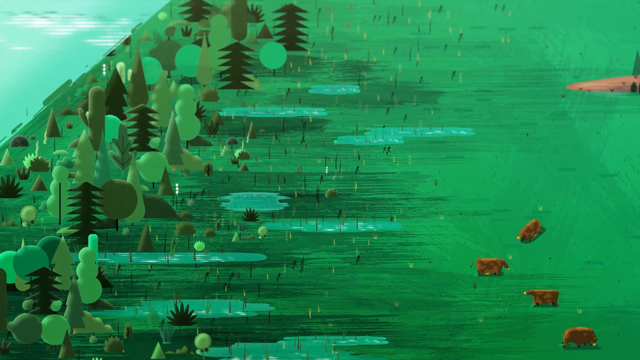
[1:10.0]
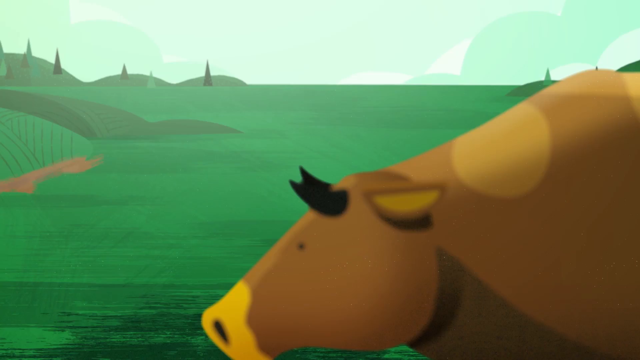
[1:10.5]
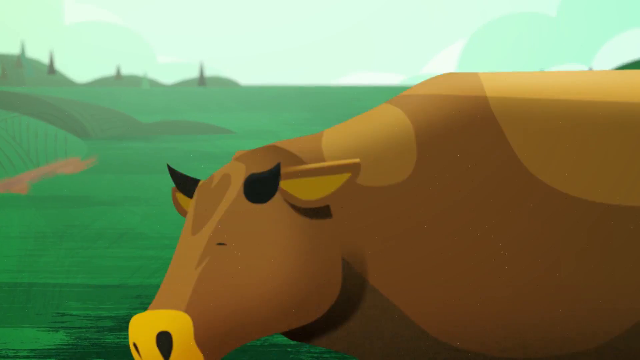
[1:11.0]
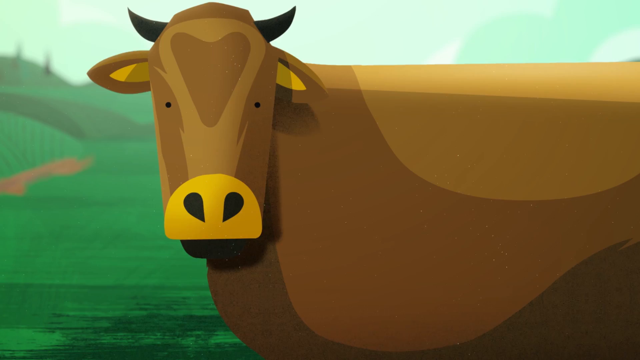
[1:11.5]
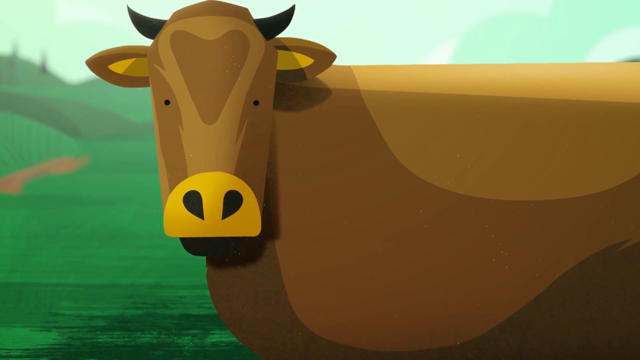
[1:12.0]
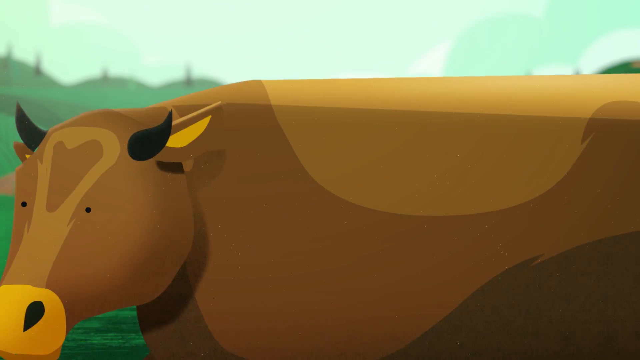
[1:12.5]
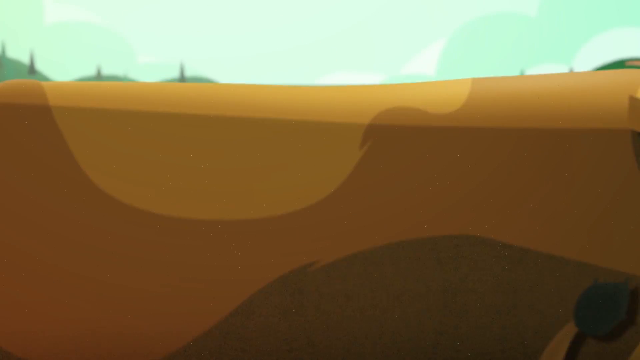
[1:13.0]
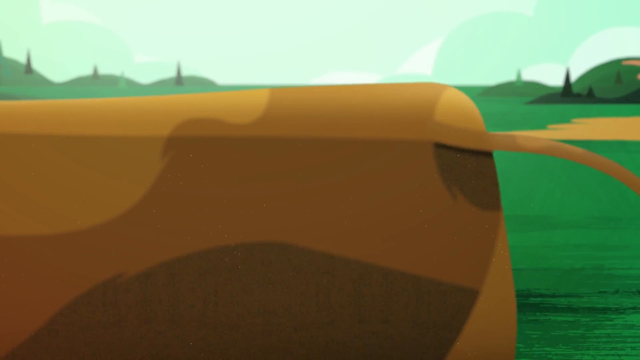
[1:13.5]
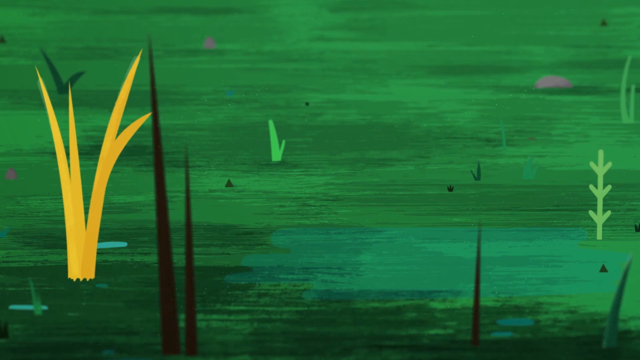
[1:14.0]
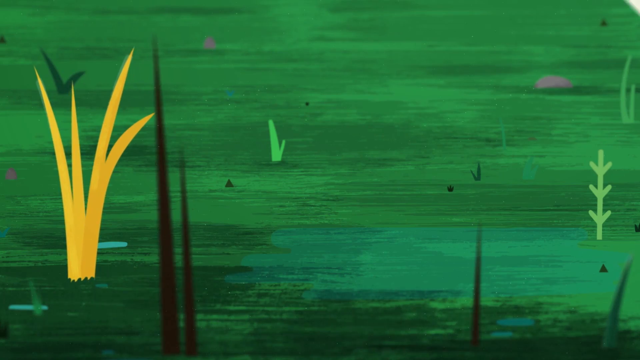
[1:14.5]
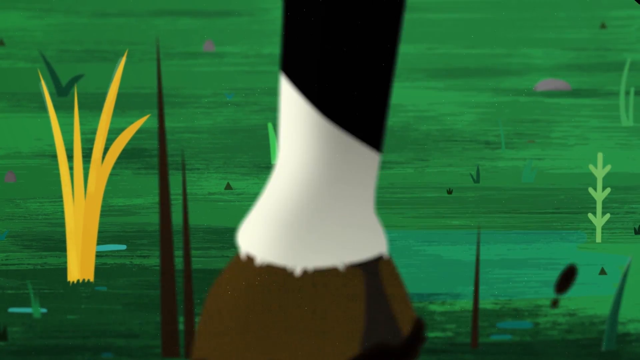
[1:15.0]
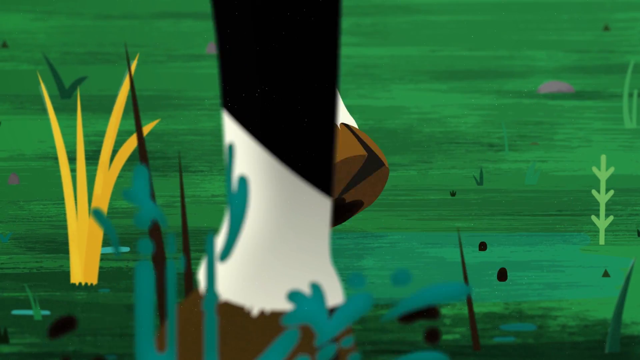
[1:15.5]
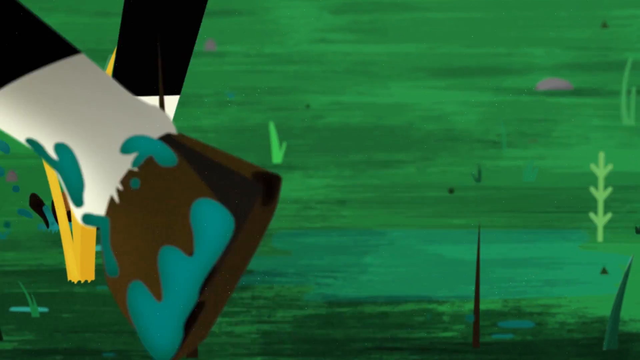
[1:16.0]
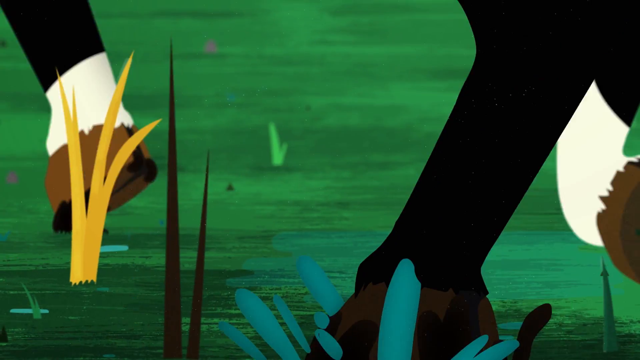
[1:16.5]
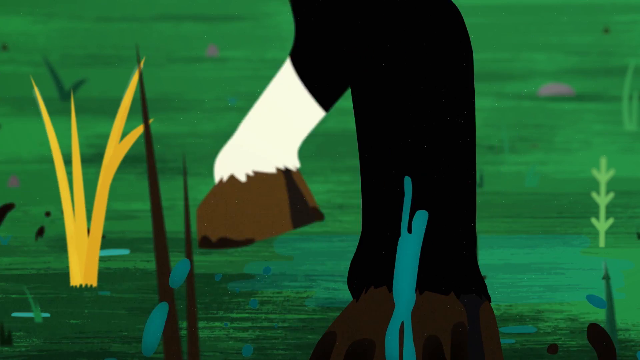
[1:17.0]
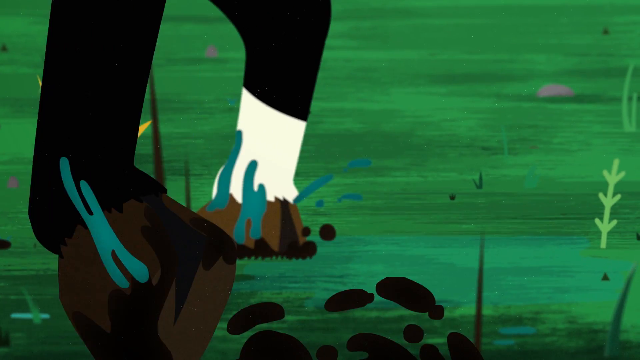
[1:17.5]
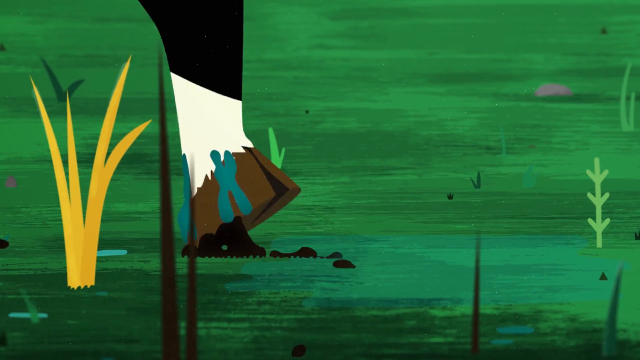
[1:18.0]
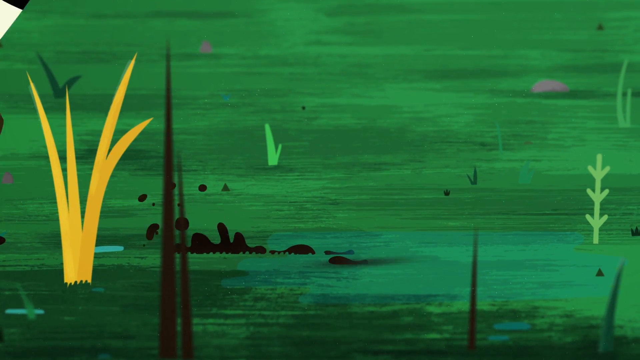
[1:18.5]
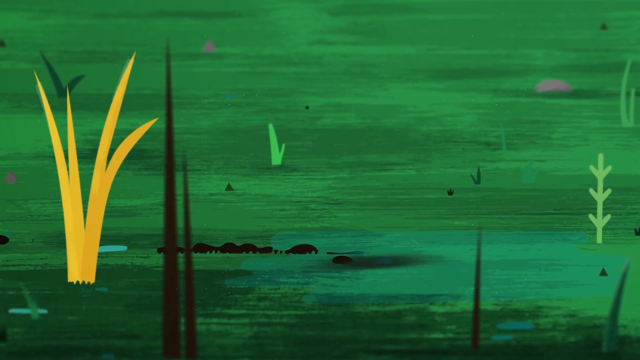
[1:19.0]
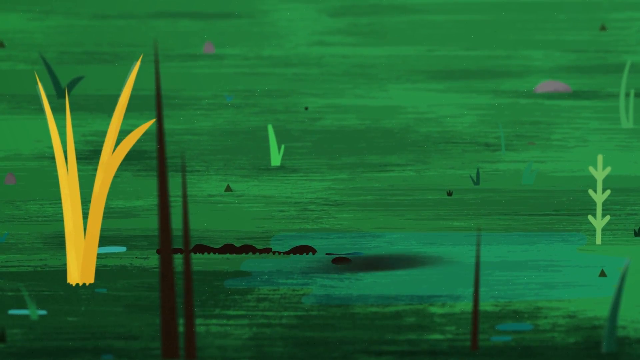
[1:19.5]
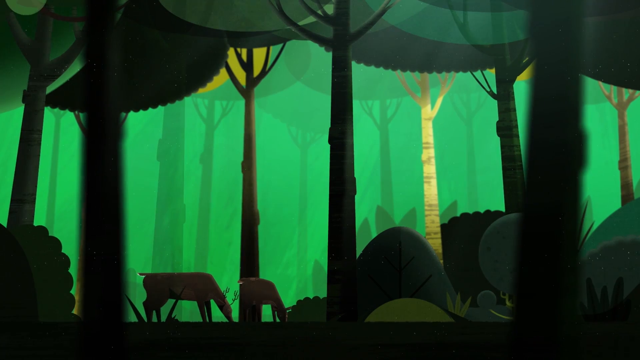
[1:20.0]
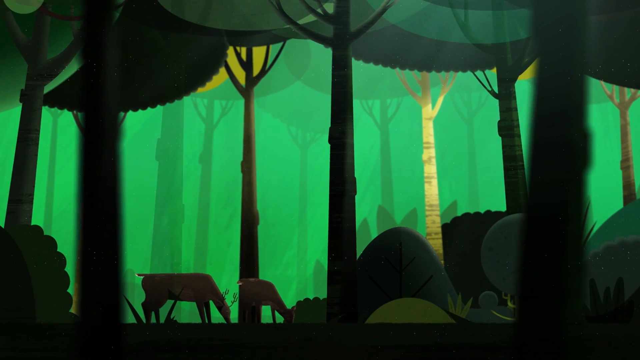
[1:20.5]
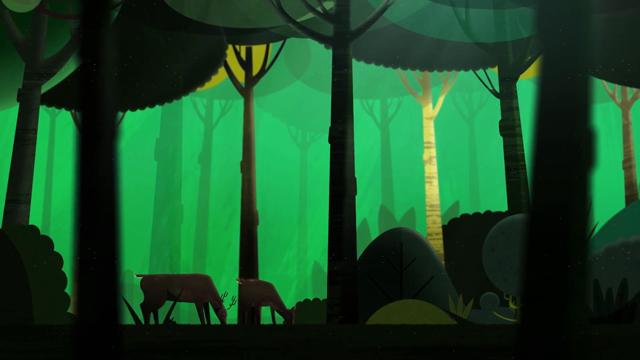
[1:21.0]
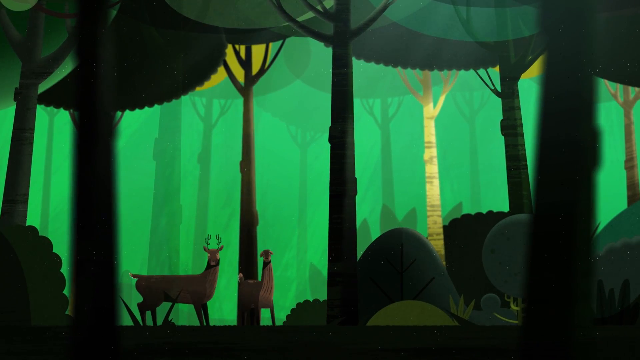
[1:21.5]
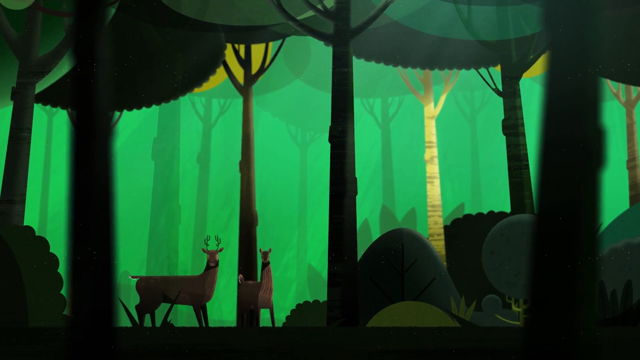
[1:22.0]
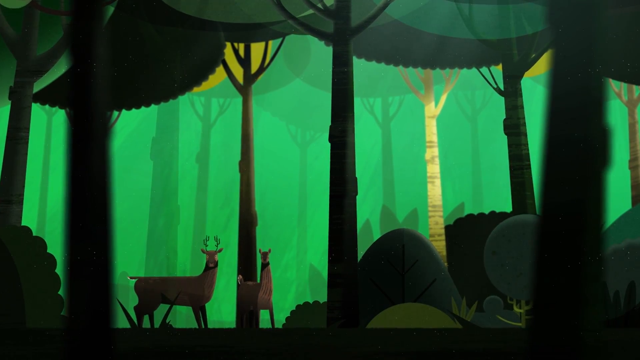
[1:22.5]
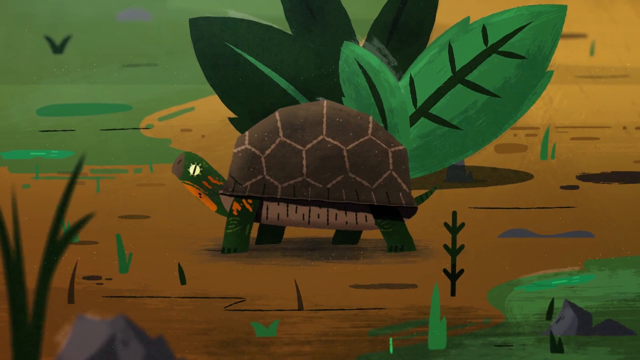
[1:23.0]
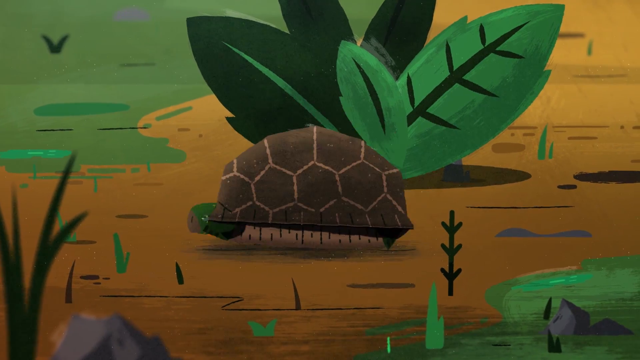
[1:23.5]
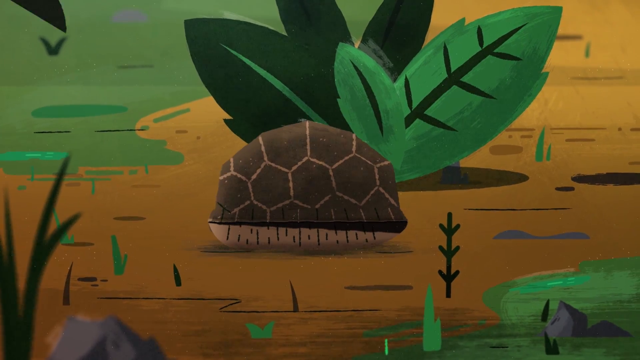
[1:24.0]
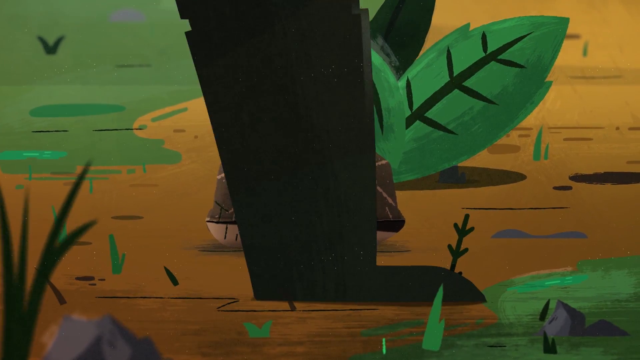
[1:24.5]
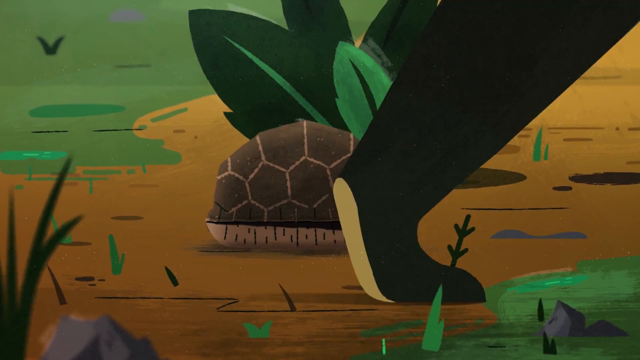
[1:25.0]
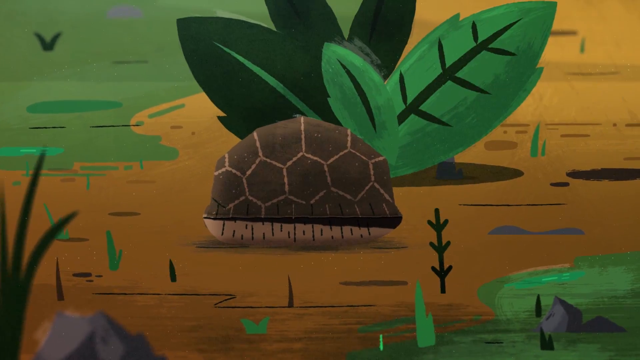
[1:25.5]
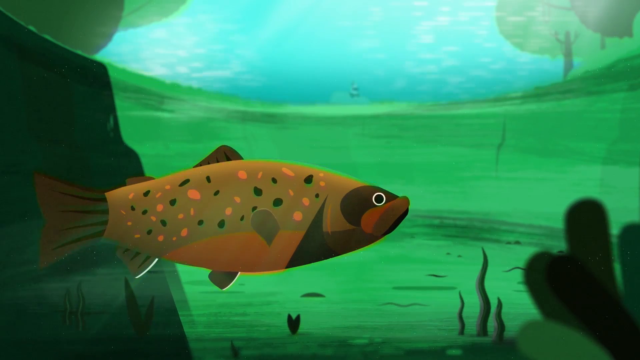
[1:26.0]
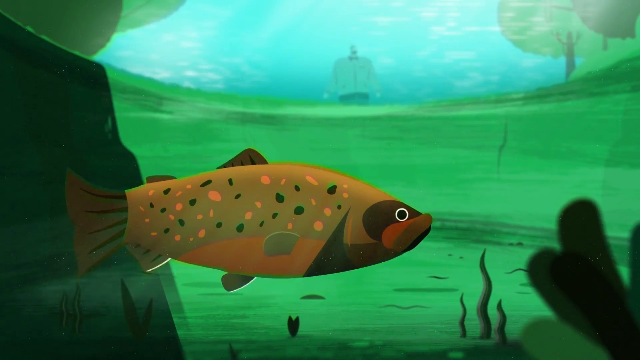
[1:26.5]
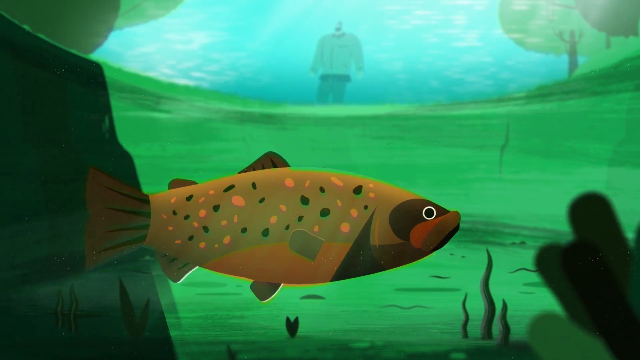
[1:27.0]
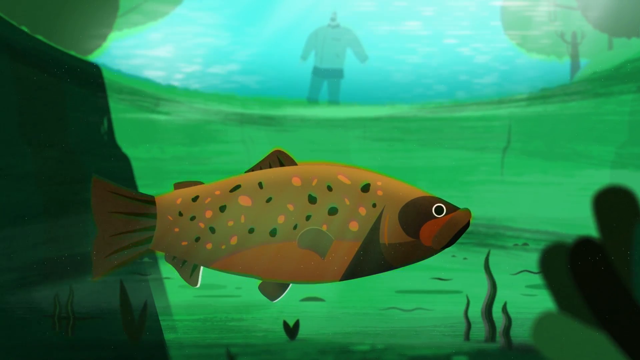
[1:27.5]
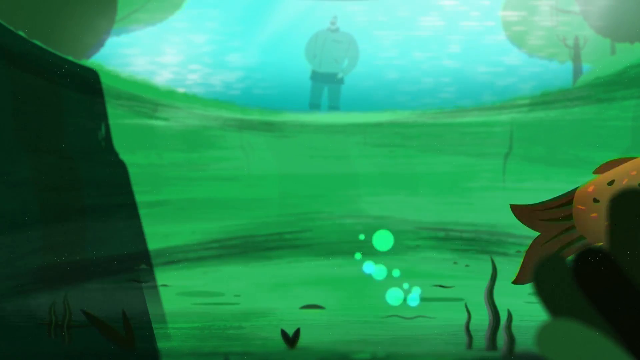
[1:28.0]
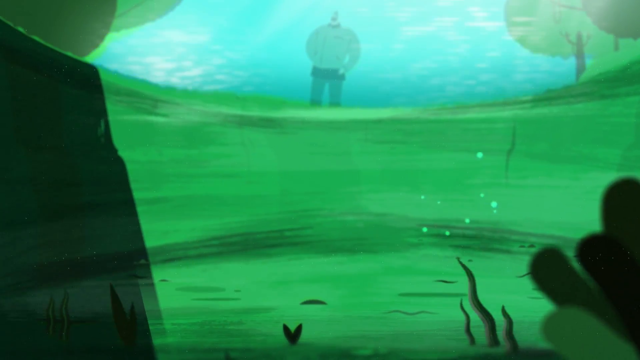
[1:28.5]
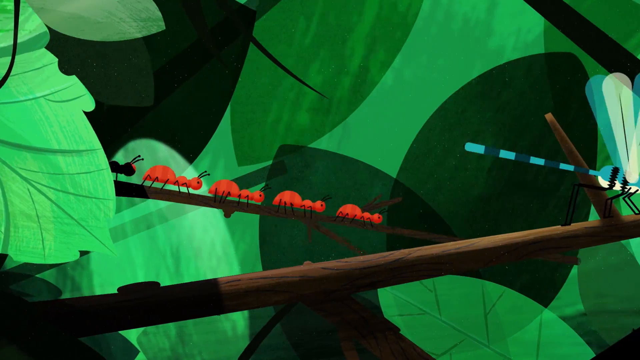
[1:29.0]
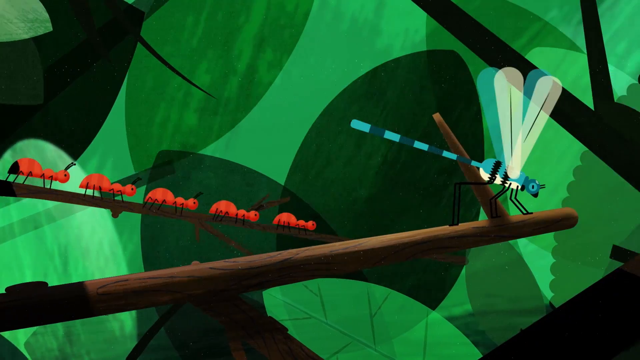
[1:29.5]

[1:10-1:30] The brown cows are in areas with water that have formed near them, and the fence that was there earlier is no longer visible. Up-close footage shows one of the cows walking from right to left; it turns toward the camera, looks shocked or surprised, and hurries off to the left side. More up-close footage shows grass and some yellow plants, and the hooves of some of the cows walk by, turning up mud. Side shots show what looks like a deer eating grass in the forest; they look shocked and look up. A side view shows a turtle that gets scared and goes into its shell as the man's foot stomps by, probably the reason it hides. A fish is shown in the water, with the man standing above the water looking at it, and the fish swims away. Then some ants crawl down a piece of wood.